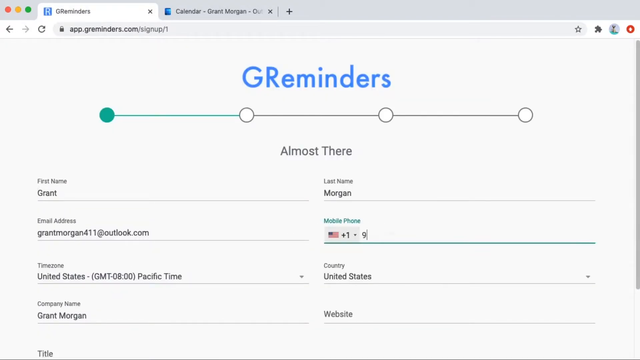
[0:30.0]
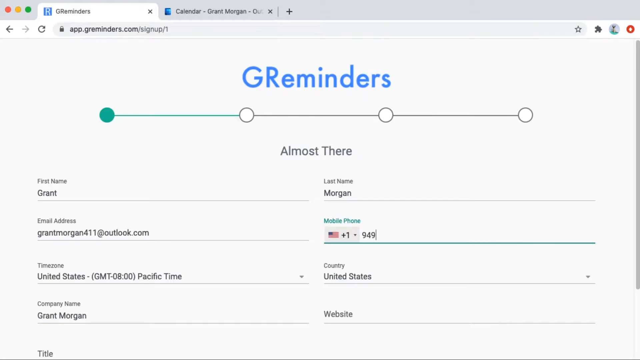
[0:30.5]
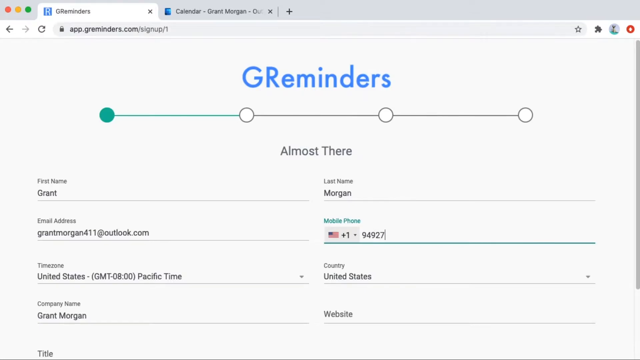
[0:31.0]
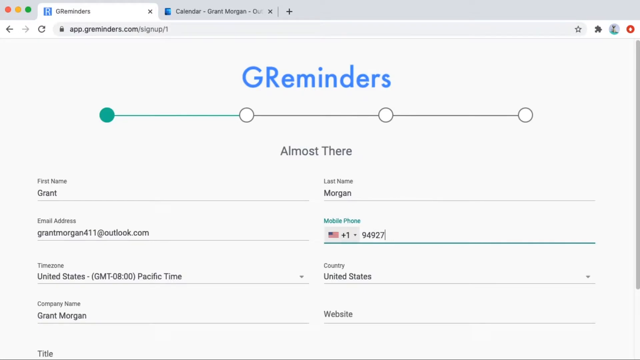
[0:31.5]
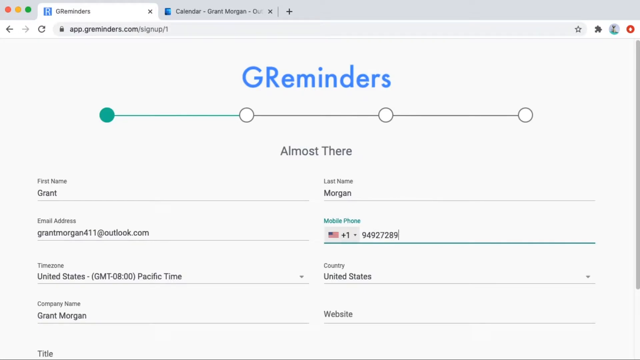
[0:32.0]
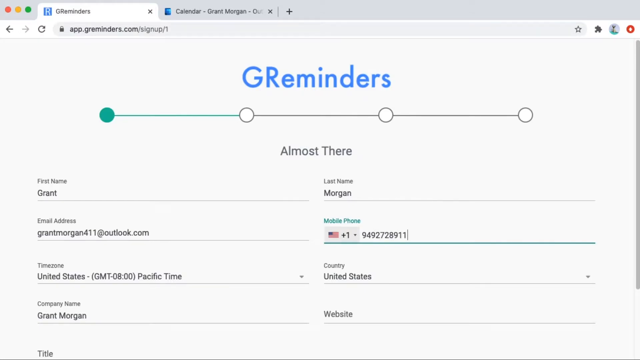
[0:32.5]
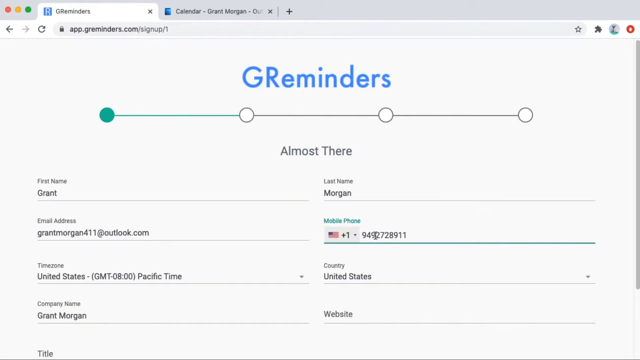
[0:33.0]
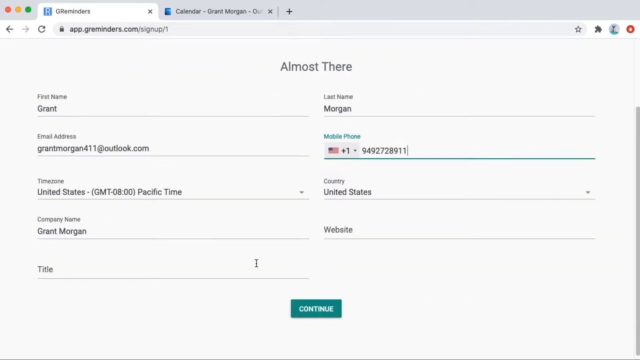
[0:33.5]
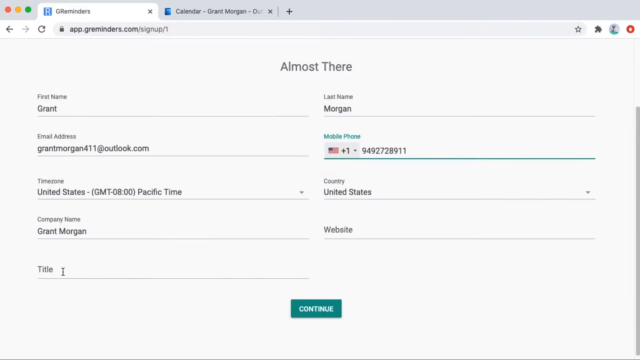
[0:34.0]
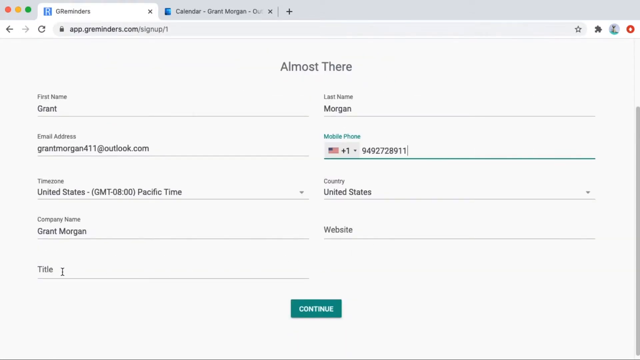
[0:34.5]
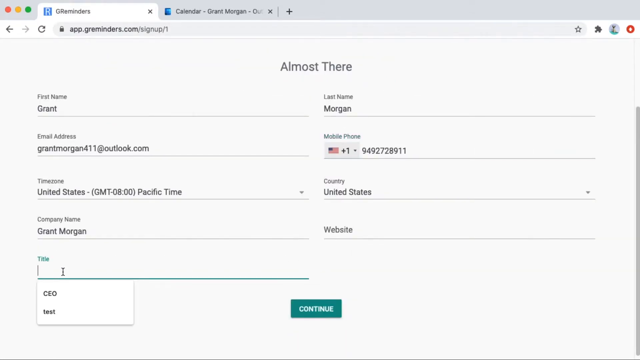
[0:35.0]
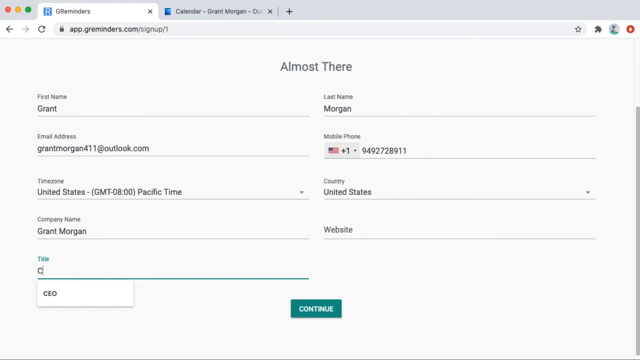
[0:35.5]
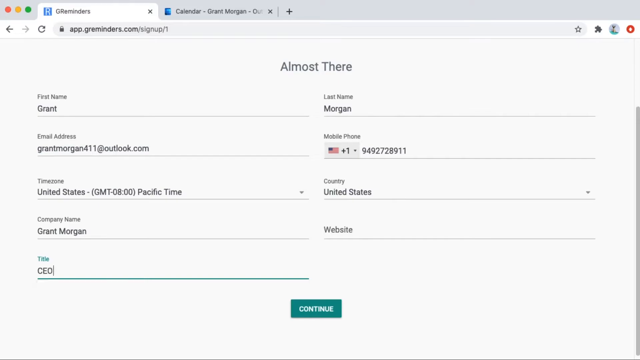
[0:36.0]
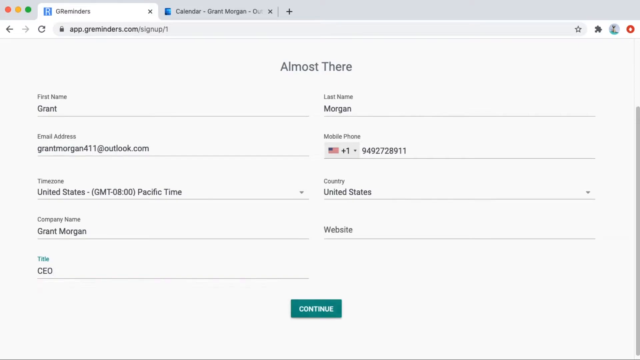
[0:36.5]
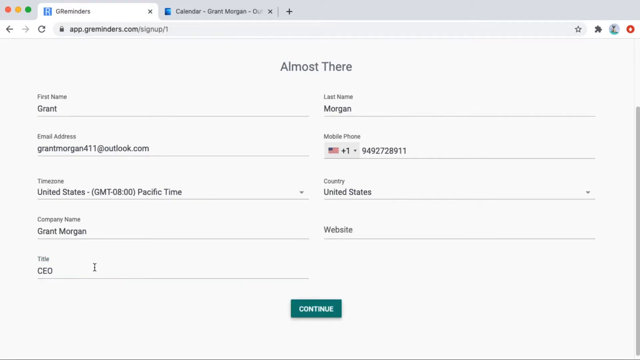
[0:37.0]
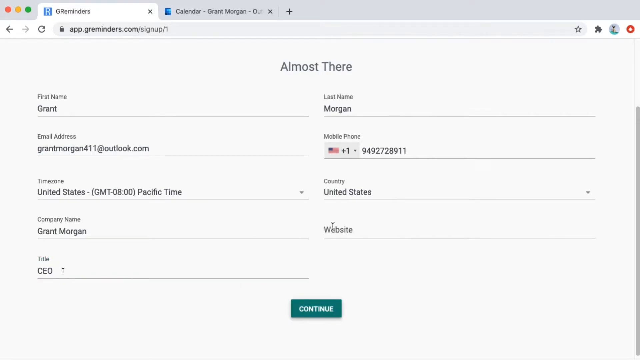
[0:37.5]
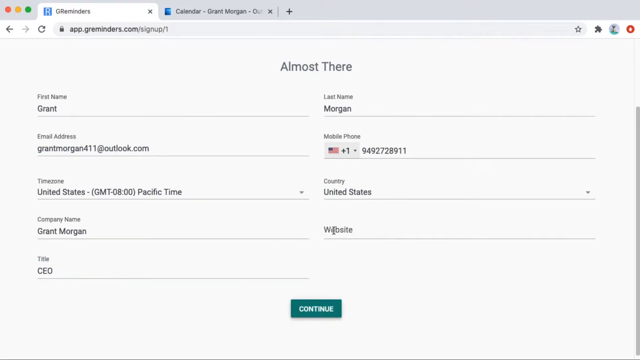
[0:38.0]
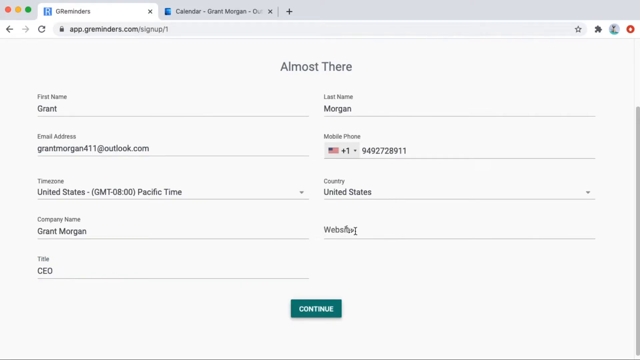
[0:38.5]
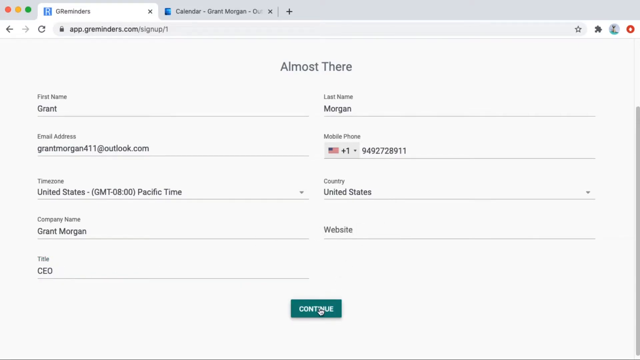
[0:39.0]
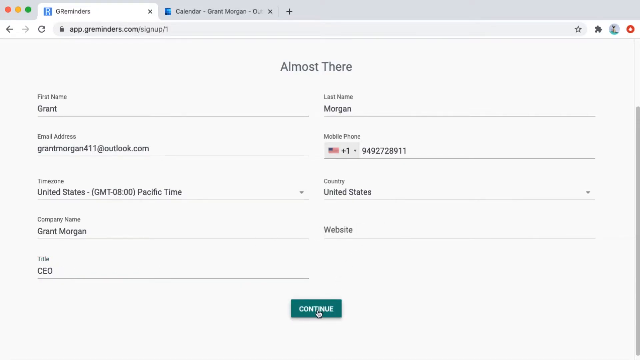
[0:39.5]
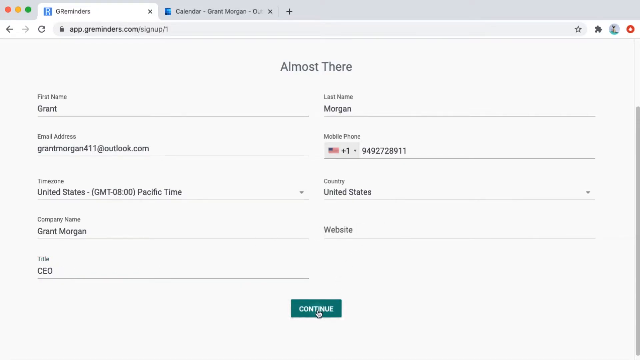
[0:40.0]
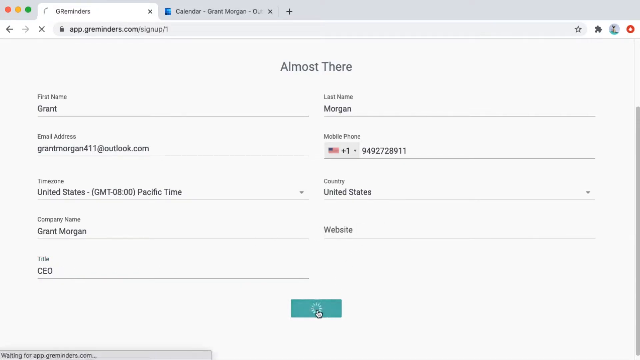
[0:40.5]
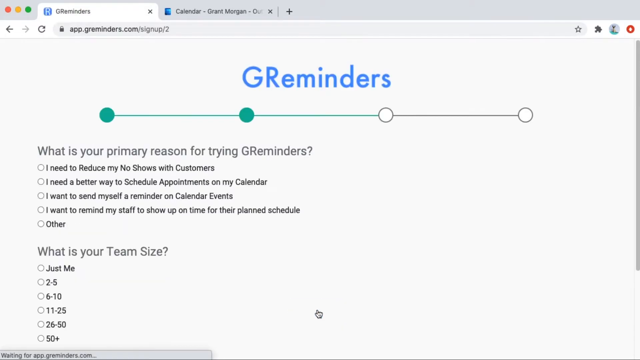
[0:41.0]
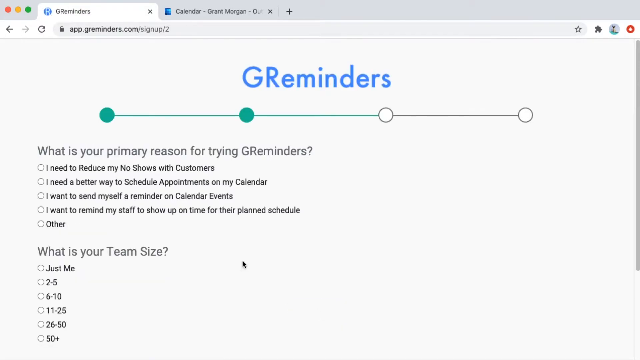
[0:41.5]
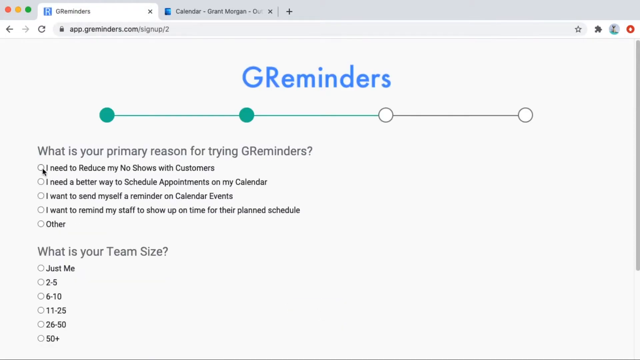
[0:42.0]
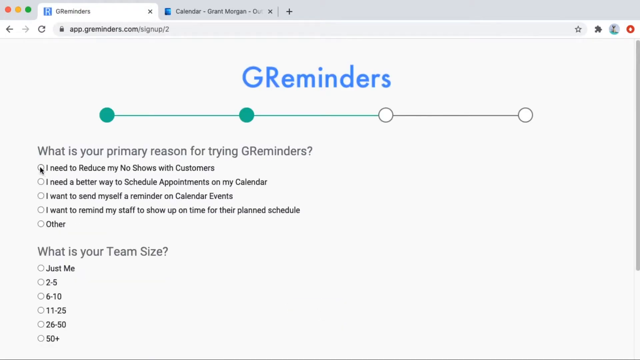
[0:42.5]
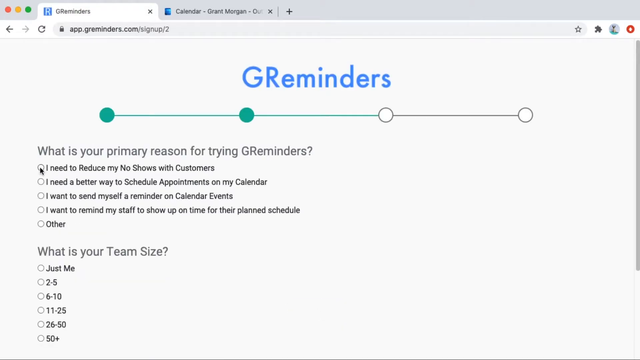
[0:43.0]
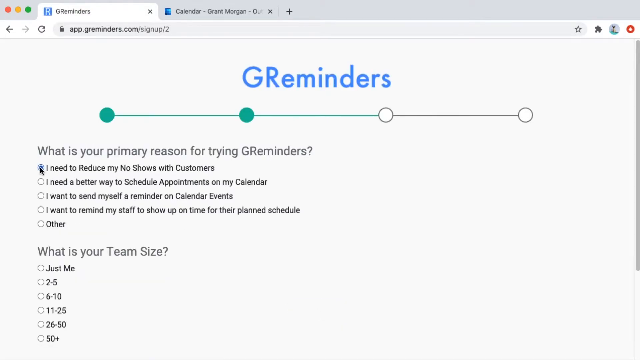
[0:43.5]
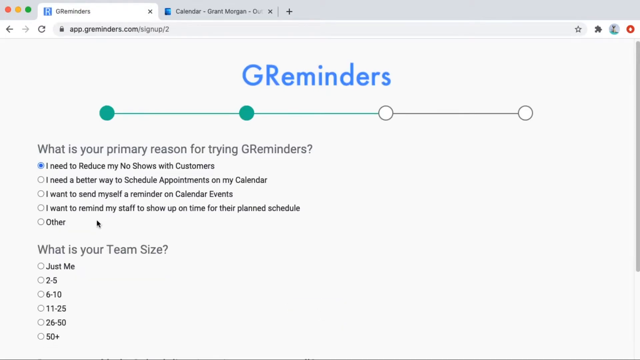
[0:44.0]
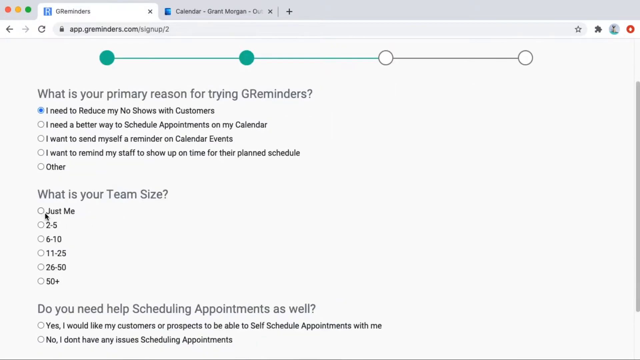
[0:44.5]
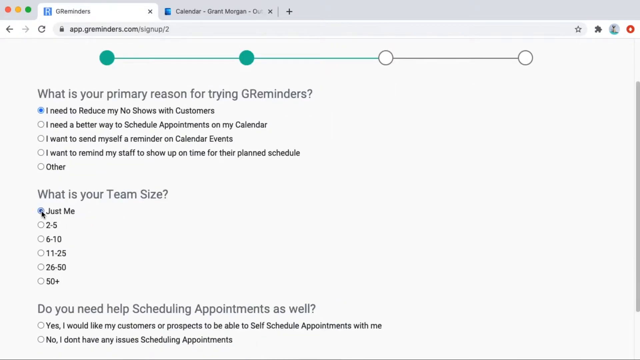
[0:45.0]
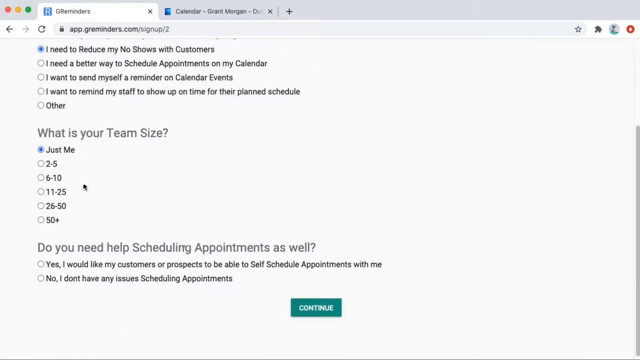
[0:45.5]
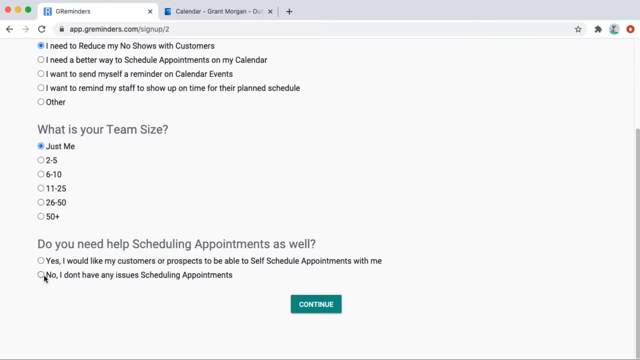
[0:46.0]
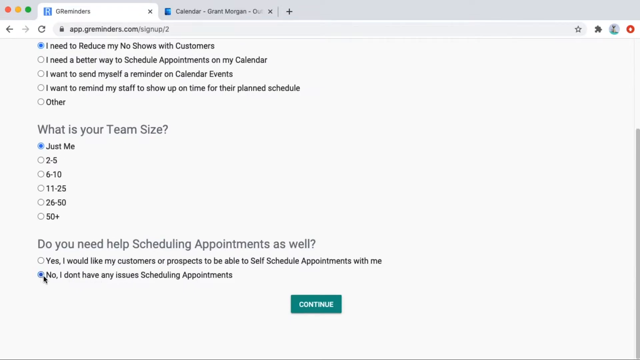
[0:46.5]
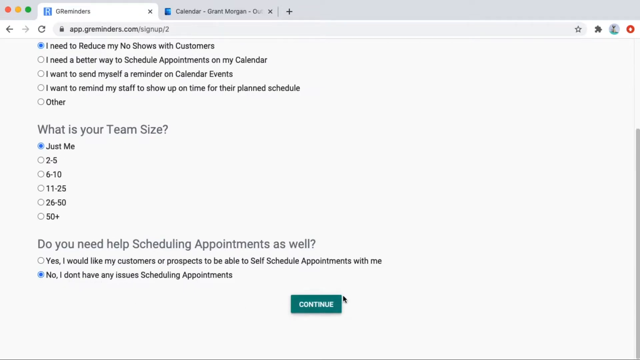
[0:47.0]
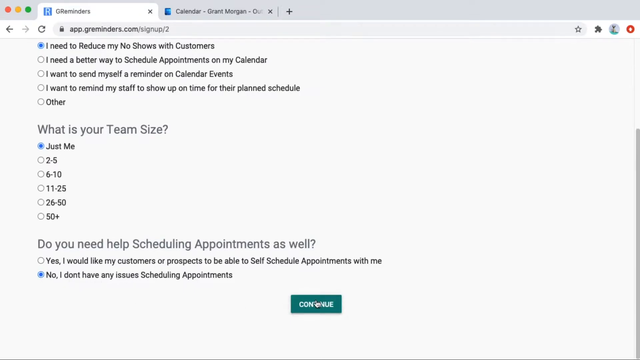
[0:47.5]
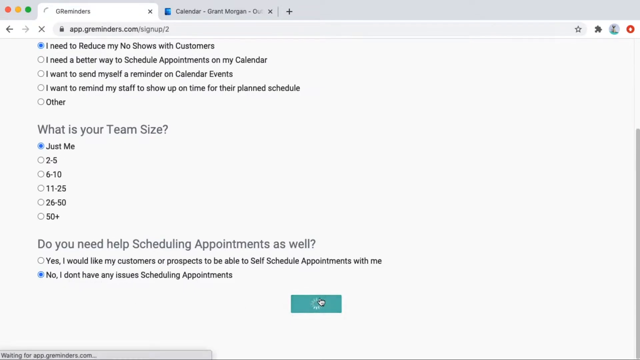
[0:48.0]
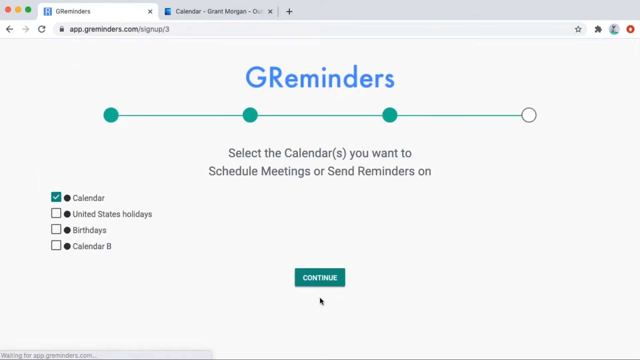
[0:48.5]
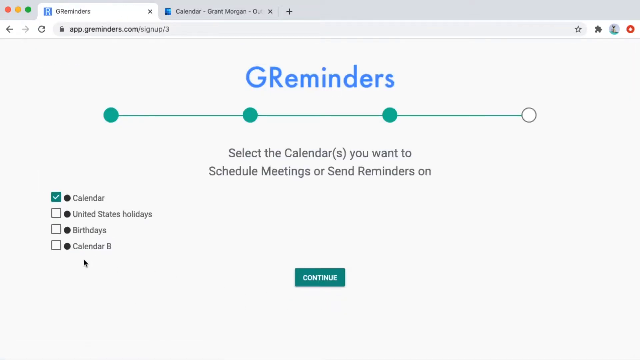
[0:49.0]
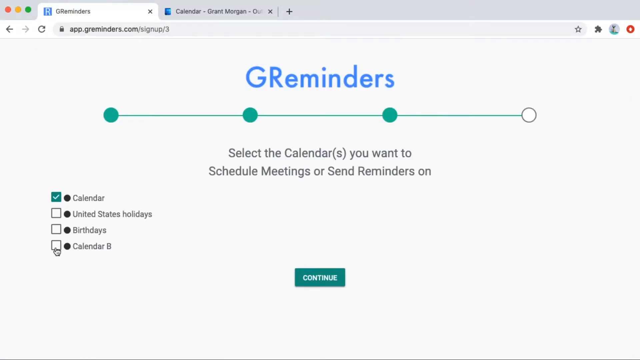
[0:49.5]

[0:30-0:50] The GR reminders app copies the user's information from Microsoft. The user adds his mobile phone number and a title. He answers the question of what his primary reason is for trying GR reminders, choosing that he needs to reduce no-shows with customers. He selects his team size as only one, indicates he has no issues scheduling appointments, and continues. The computer appears to be a MacBook, with three lights on the left side of the screen.